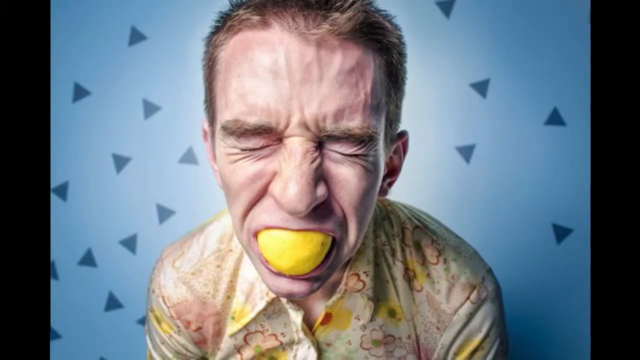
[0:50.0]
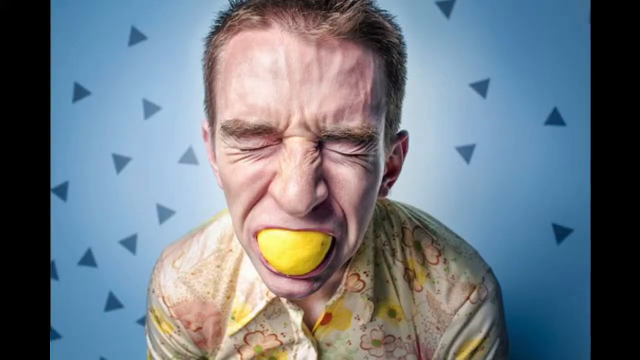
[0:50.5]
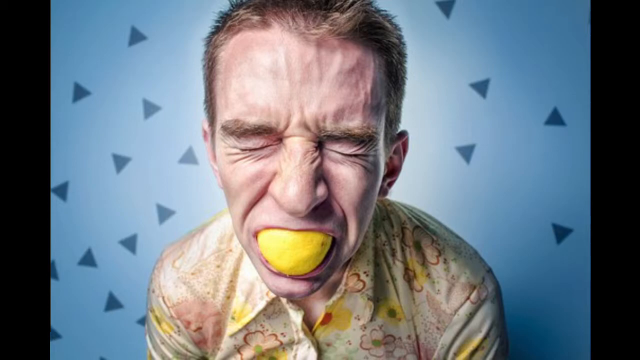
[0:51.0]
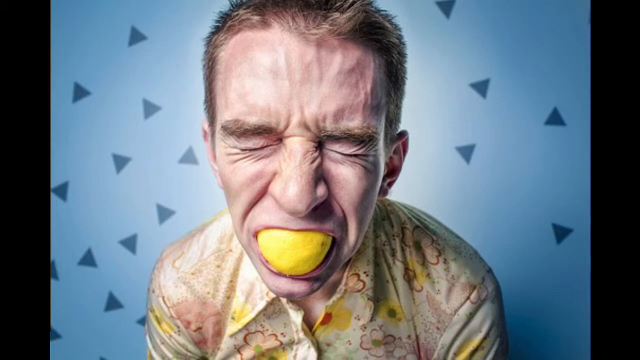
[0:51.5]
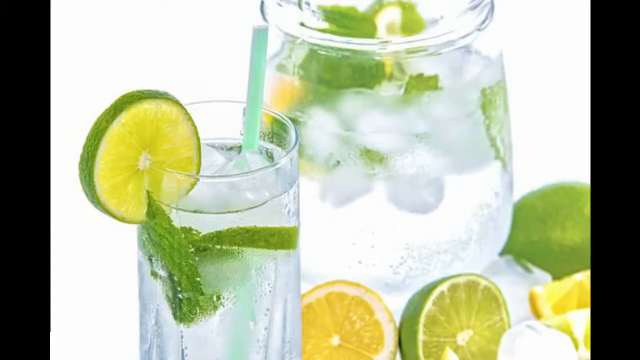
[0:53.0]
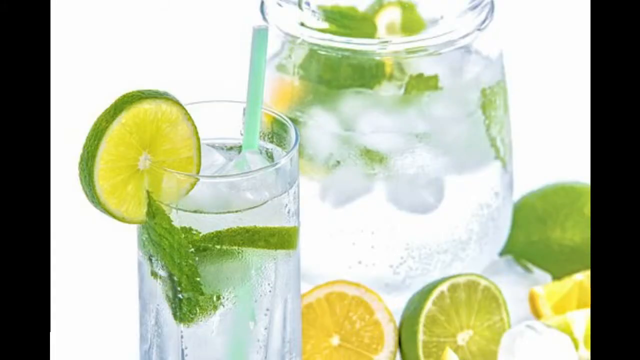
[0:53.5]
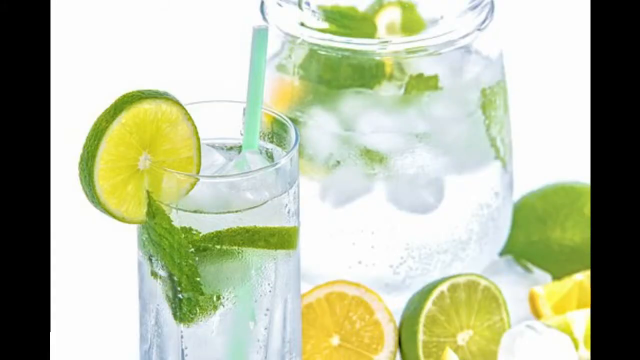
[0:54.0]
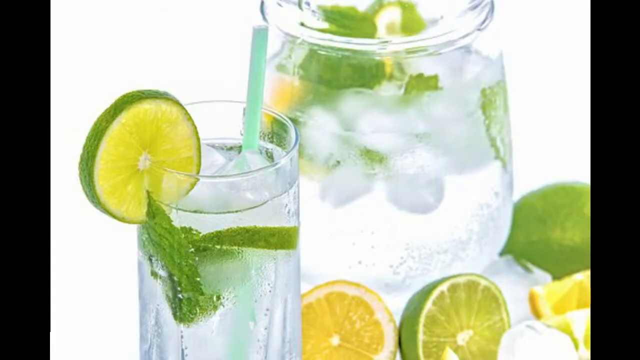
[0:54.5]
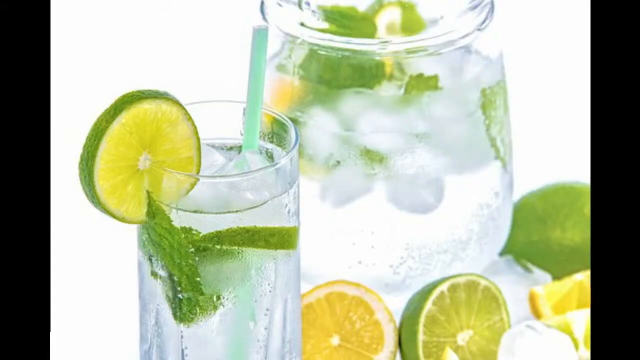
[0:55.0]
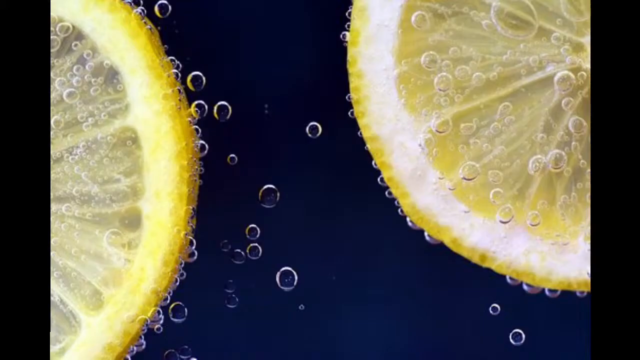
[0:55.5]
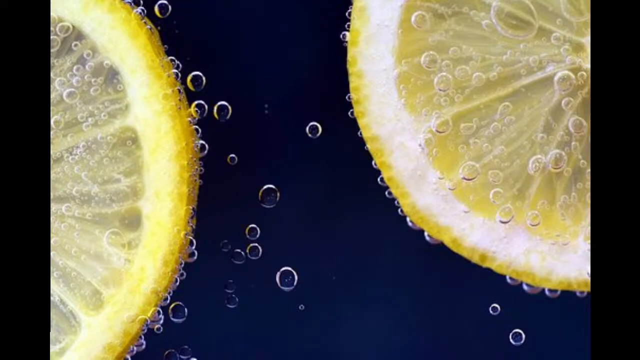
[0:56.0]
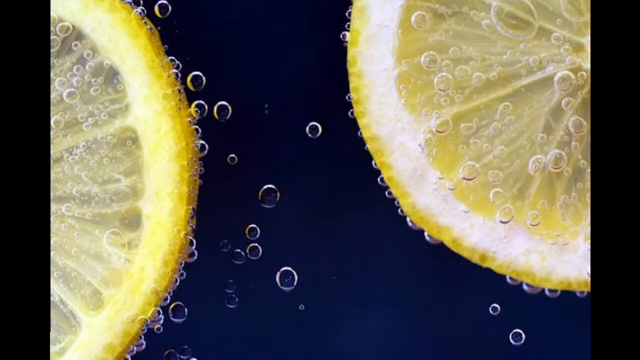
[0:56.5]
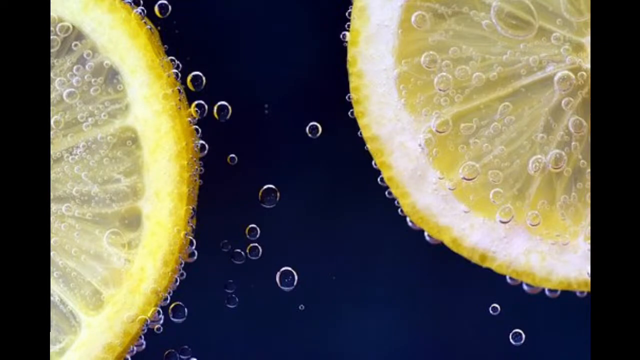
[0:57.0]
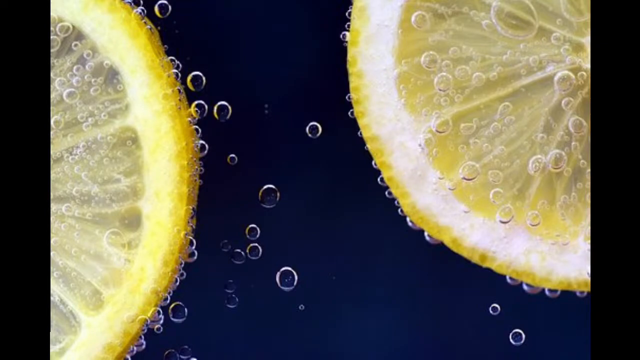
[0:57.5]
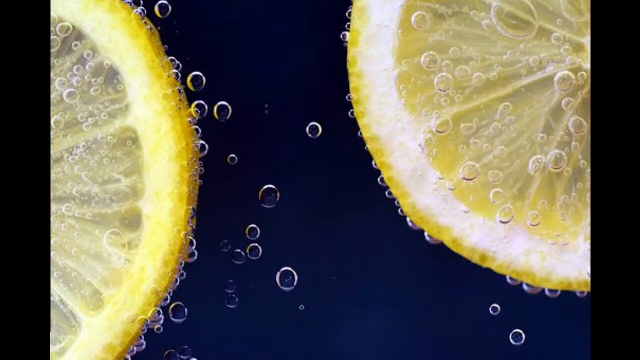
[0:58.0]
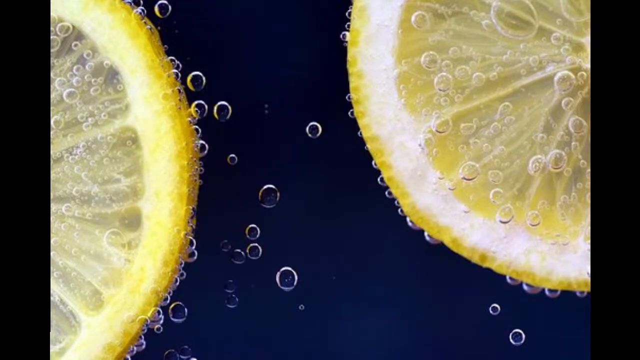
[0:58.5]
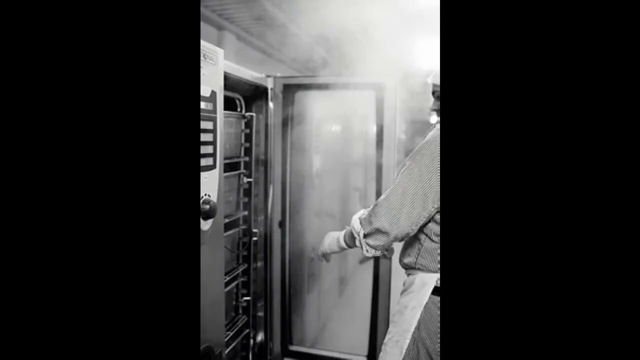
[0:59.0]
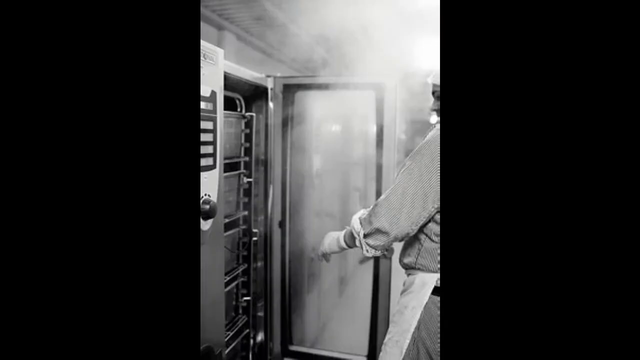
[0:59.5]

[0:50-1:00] An image shows a man with a cut lemon in his mouth, his eyes pressed extremely forcefully closed as if wincing from the sourness. He has short brown hair and wears a floral t-shirt with flowers and butterflies on it. The background is blue with dark blue triangles kind of floating all over it. A cut-up lemon and lime are around a water pitcher, with ice cubes in and around the pitcher. To the left of the pitcher is a glass with a cut lime on the rim and the liquid from the pitcher inside. Two lemons floating in water are shown next.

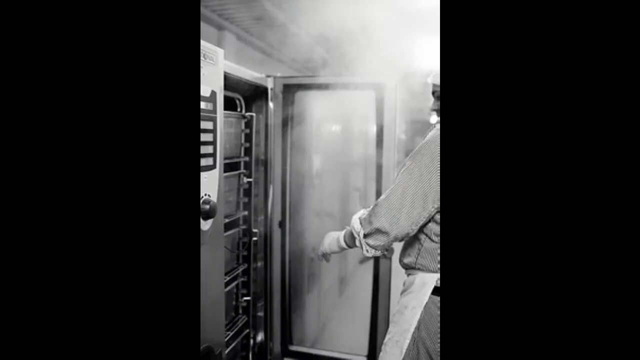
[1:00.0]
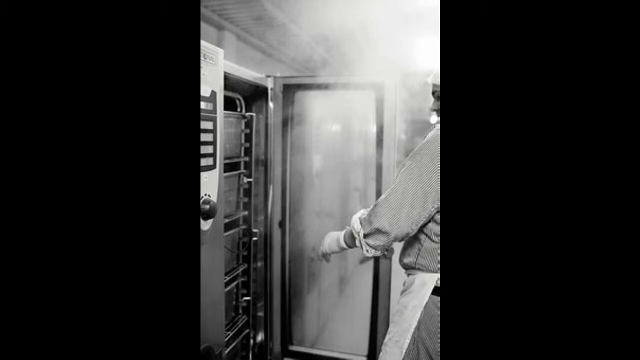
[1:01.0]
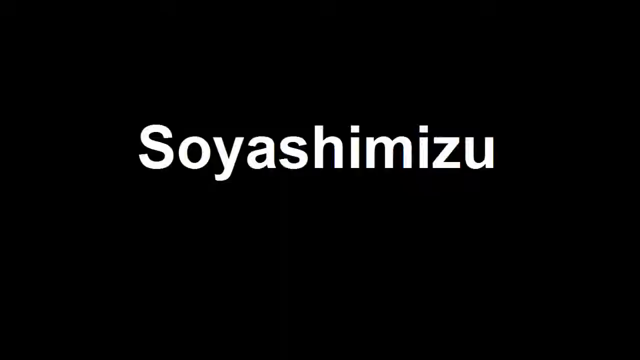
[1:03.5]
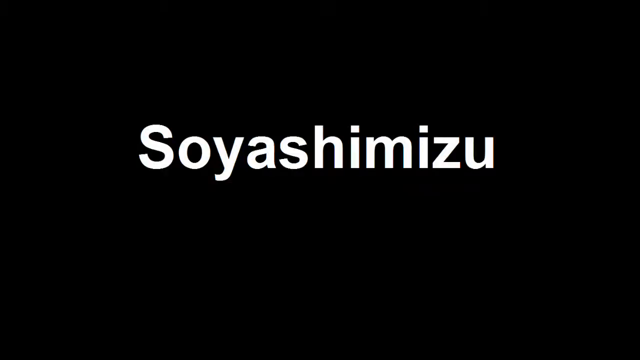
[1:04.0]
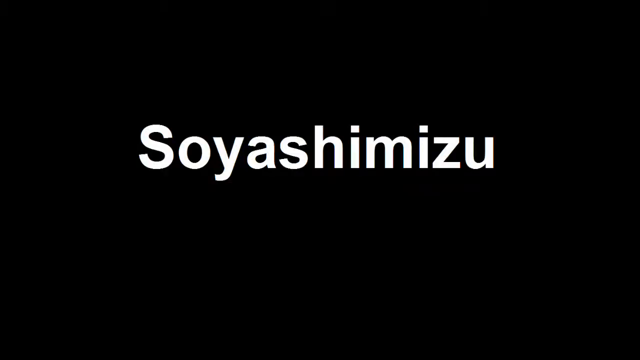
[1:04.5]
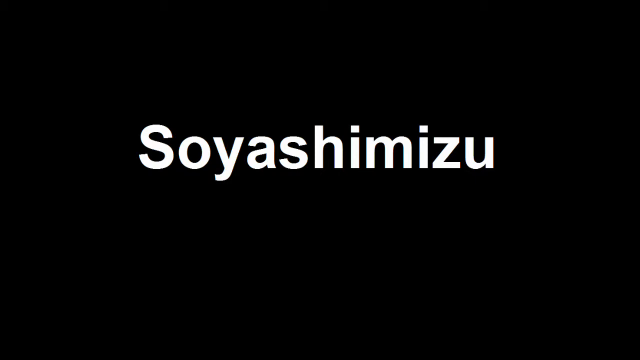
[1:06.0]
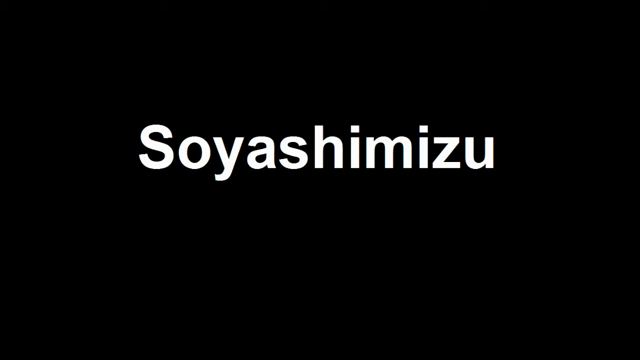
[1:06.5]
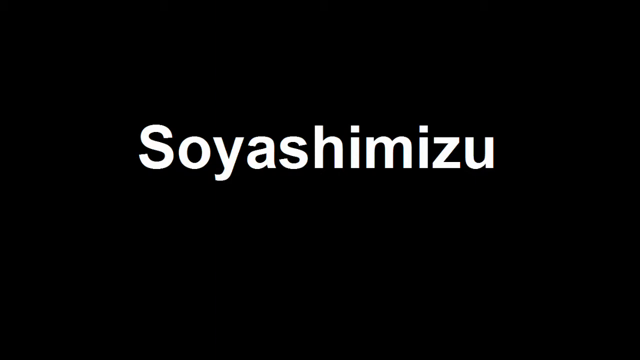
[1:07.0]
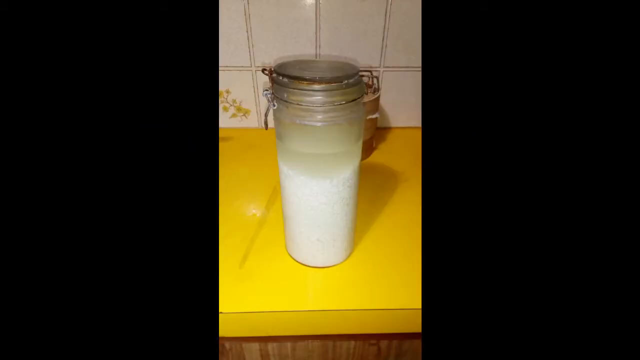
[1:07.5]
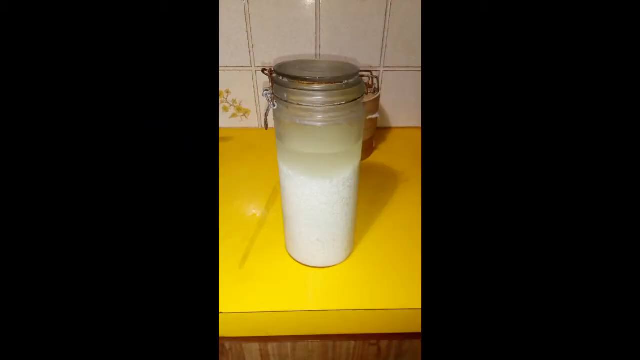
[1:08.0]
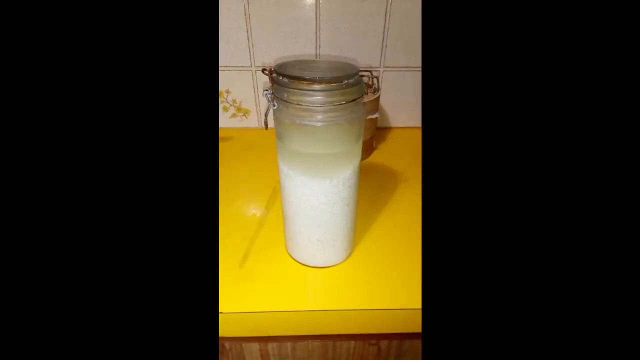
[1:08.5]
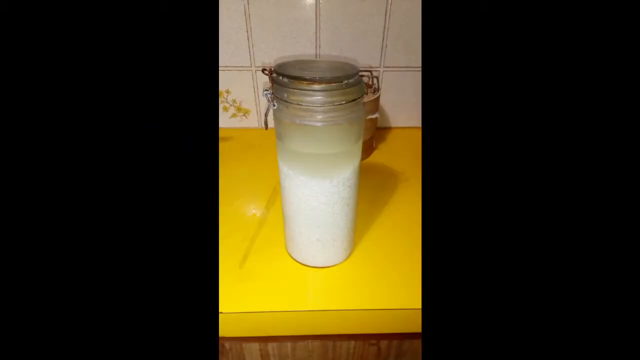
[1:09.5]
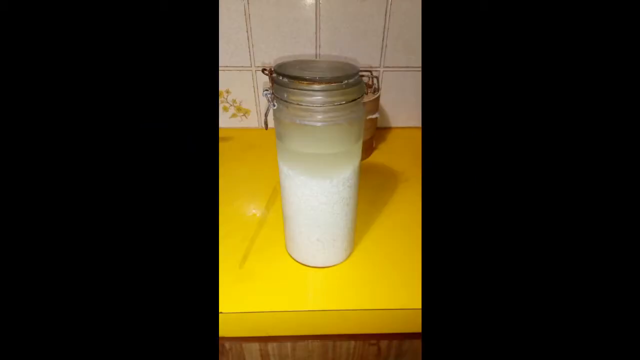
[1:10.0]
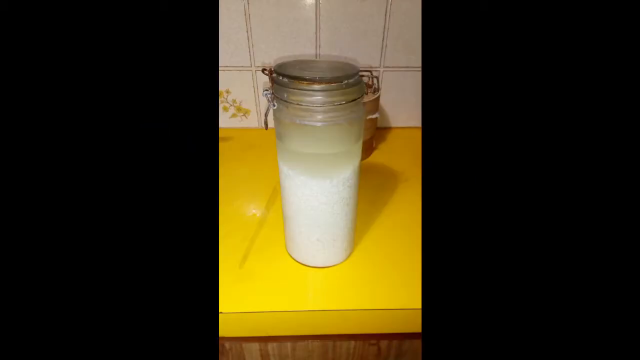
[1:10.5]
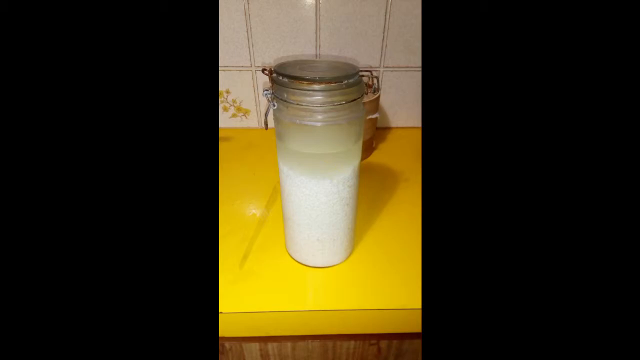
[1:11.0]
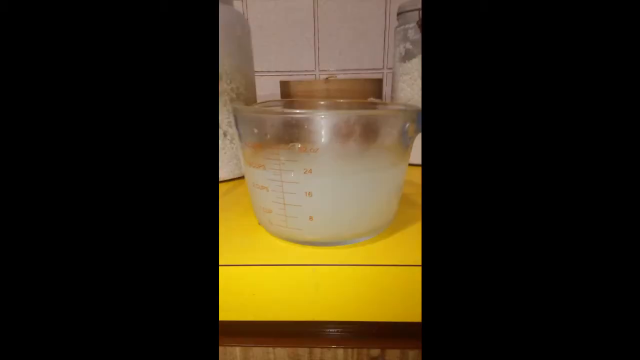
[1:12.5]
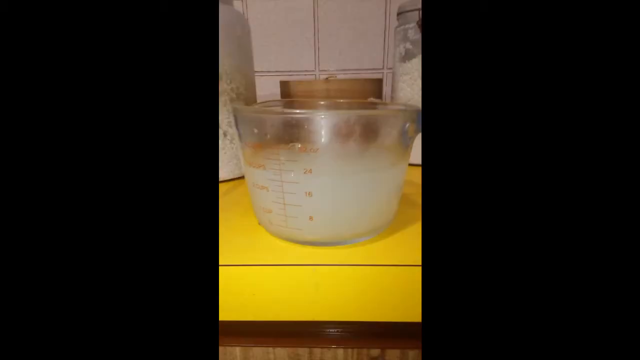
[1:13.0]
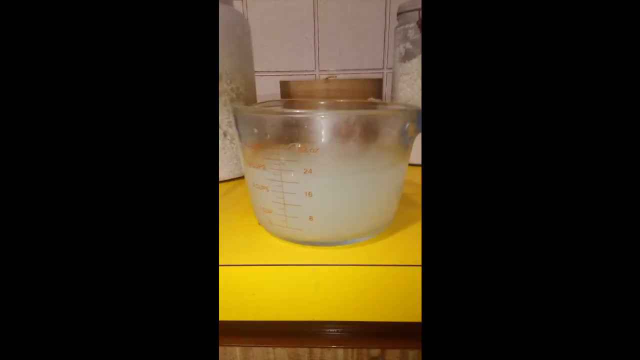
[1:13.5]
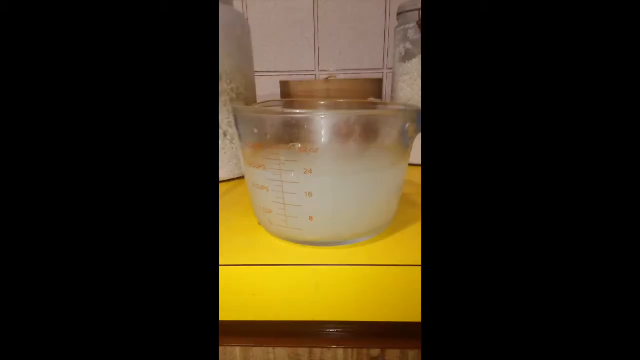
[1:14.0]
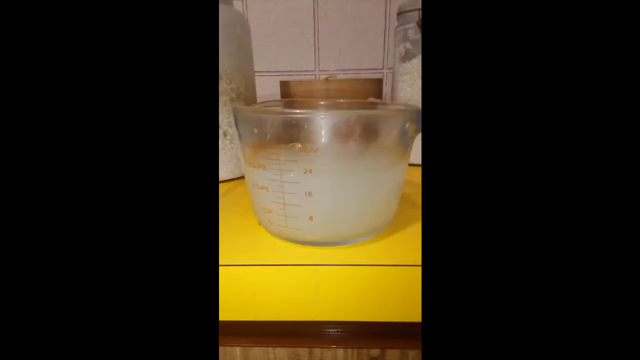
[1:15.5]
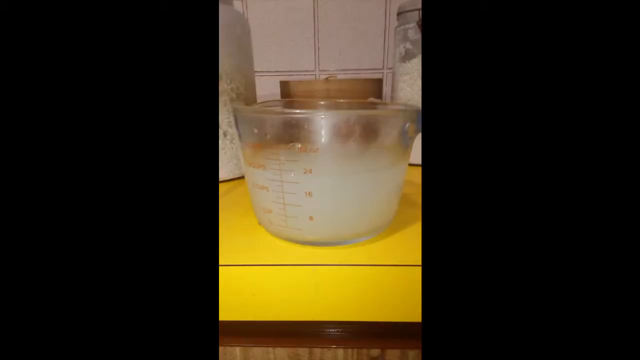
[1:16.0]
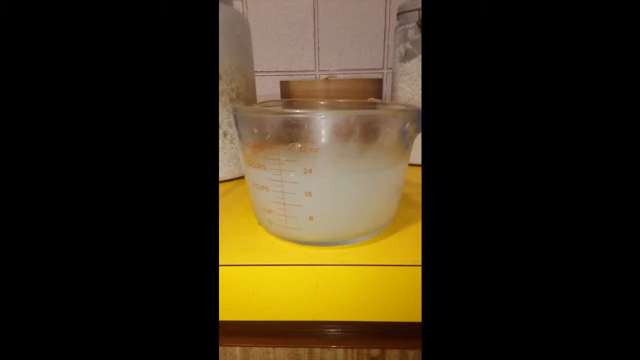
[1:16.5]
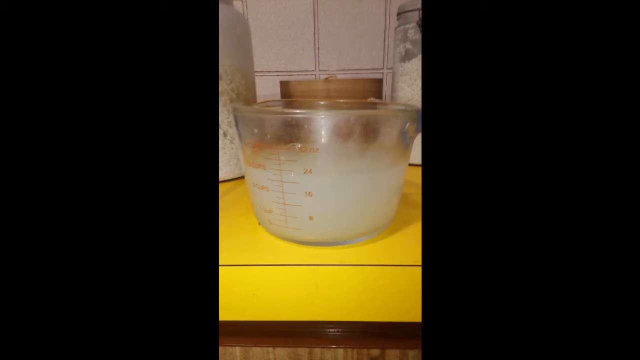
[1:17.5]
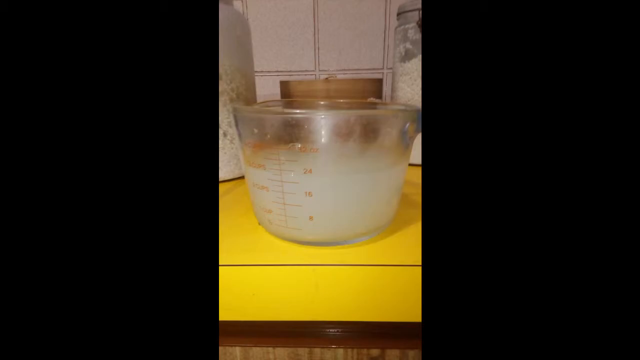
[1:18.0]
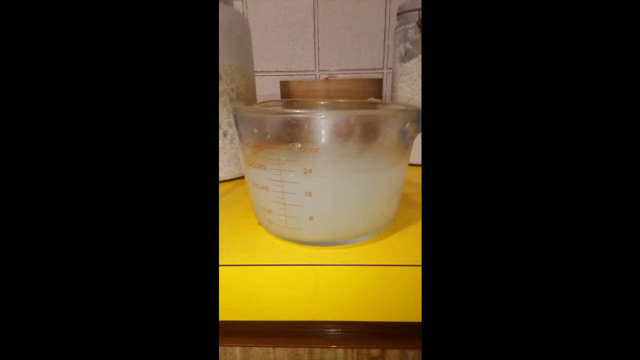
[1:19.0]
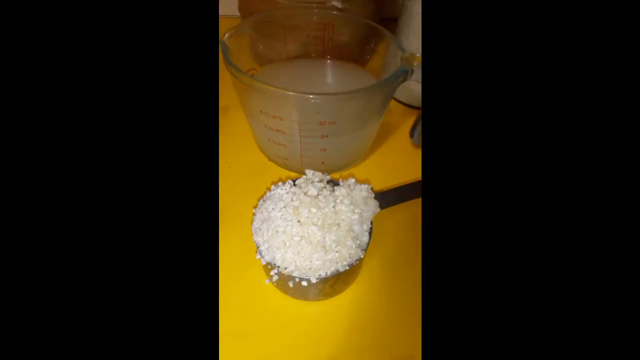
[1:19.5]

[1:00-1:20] The term "soyashimizu" appears on screen in white lettering on a black background. The video cuts to the container holding the liquid with the cooked and uncooked rice. It is pressed closed like a kombucha container, with kind of a locking mechanism at the top of the bottle. Next, a measuring cup holds just under three cups of a cloudy liquid, possibly the liquid from that container. The last shot apparently shows the cooked and uncooked rice in a measuring cup, so the container's contents seem to have been separated into two measuring cups, the liquid and the solids.